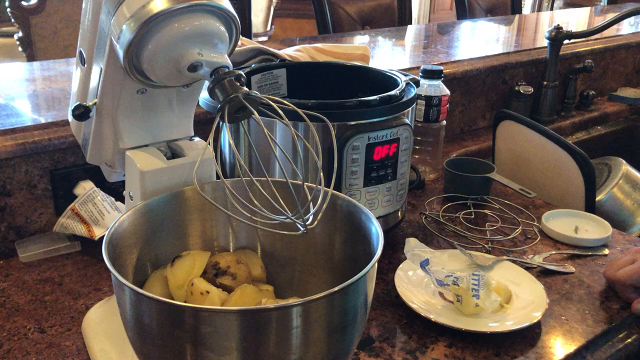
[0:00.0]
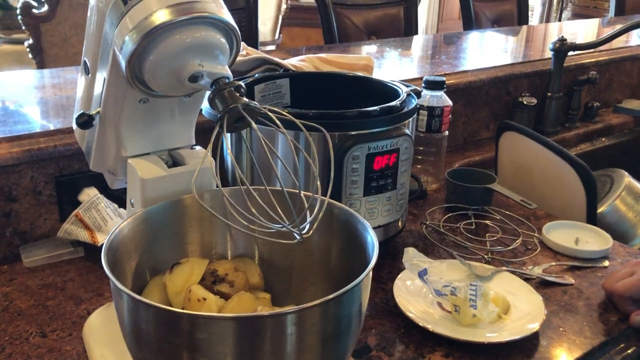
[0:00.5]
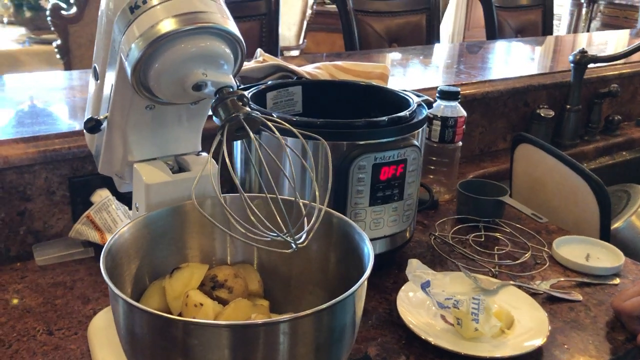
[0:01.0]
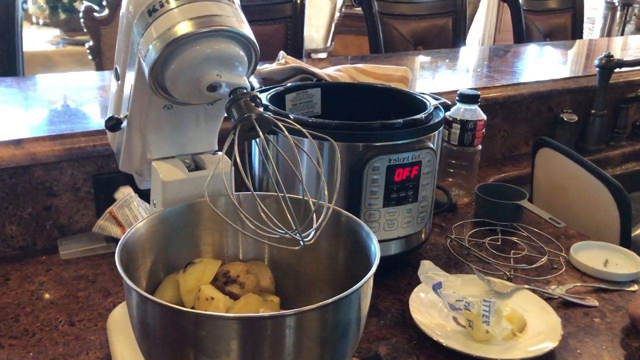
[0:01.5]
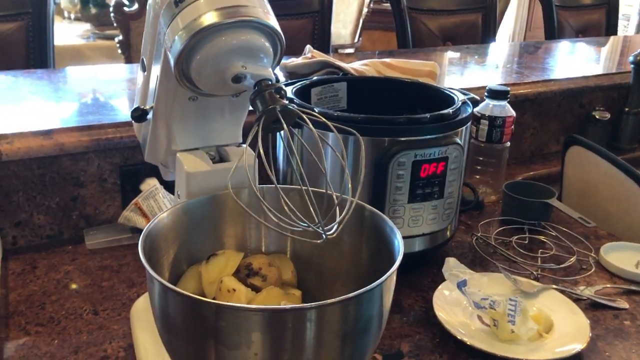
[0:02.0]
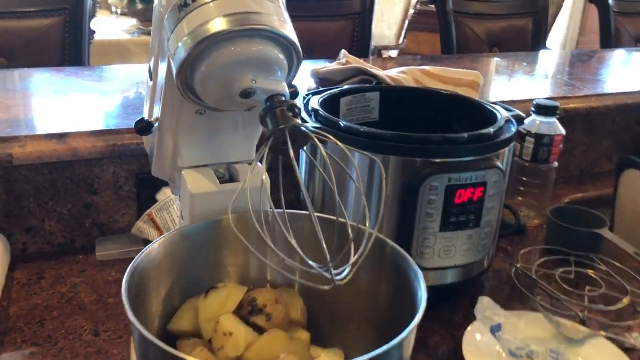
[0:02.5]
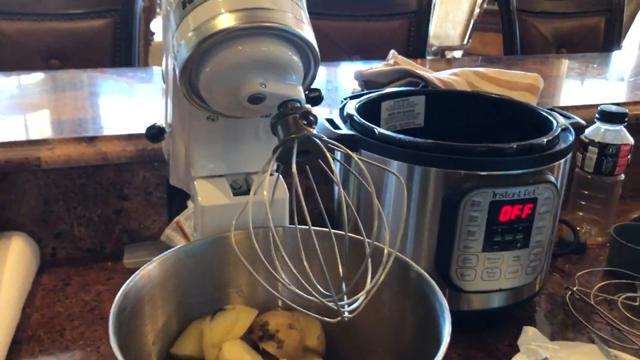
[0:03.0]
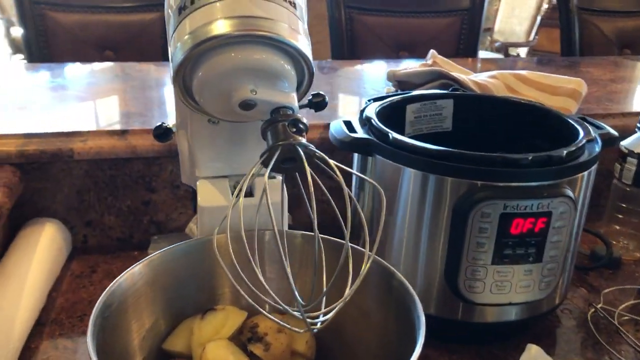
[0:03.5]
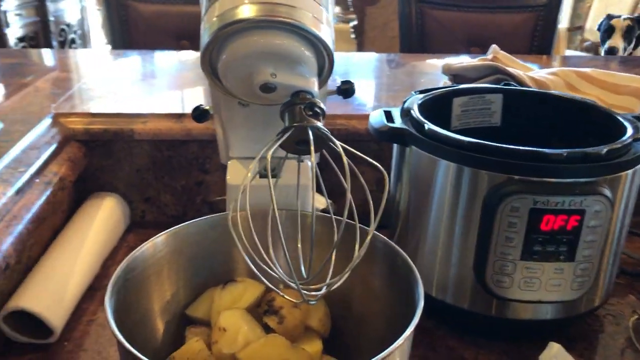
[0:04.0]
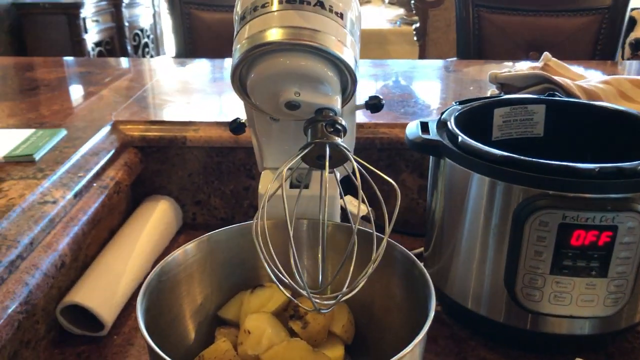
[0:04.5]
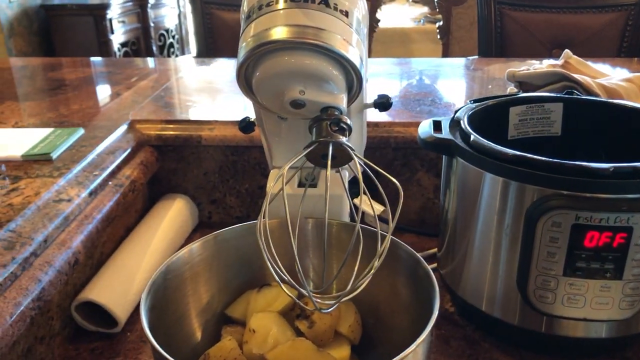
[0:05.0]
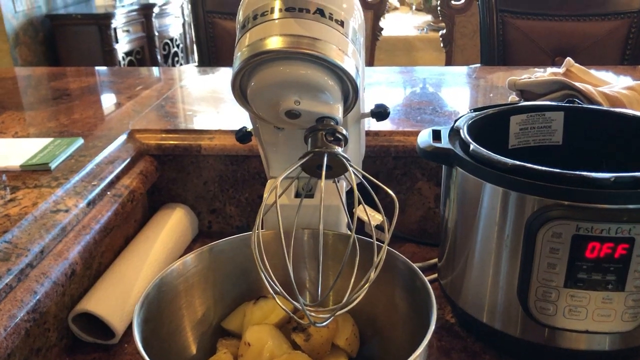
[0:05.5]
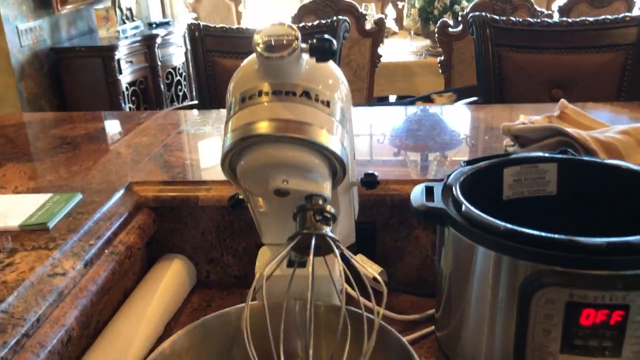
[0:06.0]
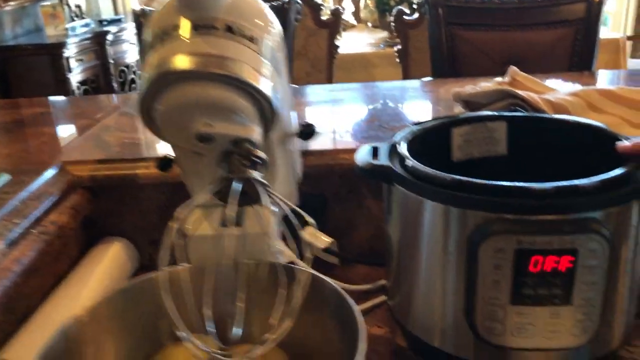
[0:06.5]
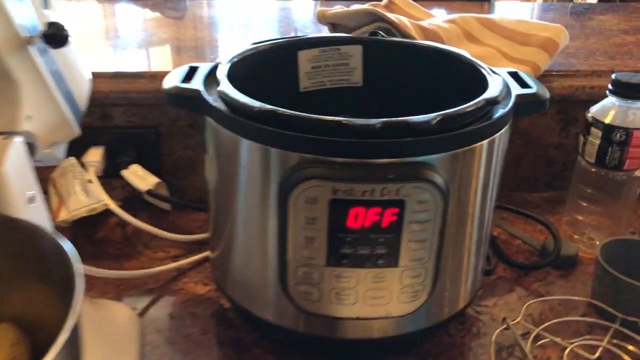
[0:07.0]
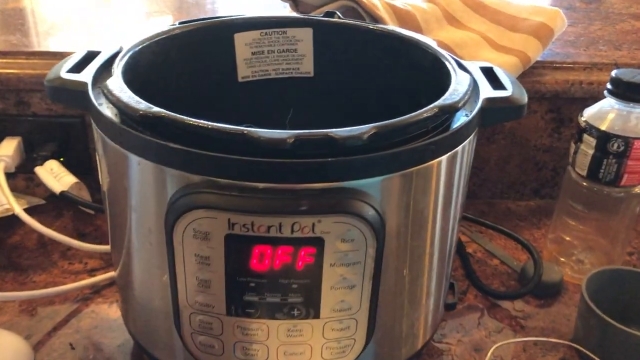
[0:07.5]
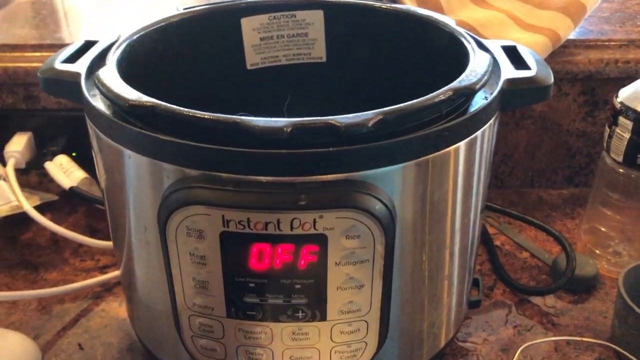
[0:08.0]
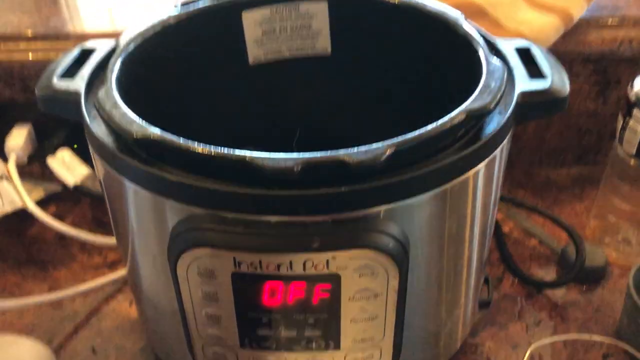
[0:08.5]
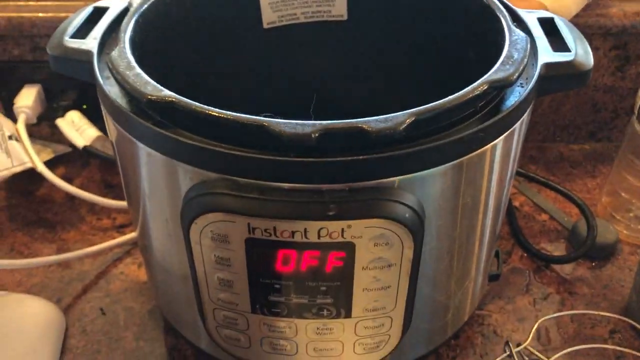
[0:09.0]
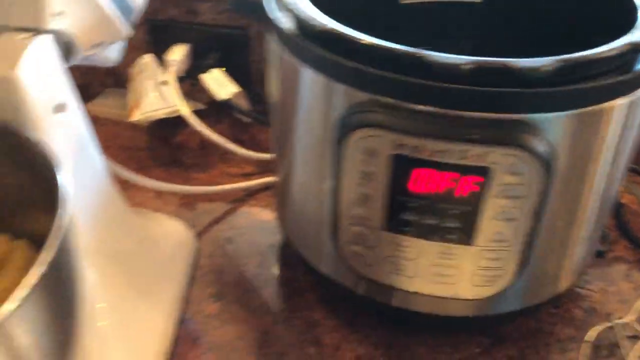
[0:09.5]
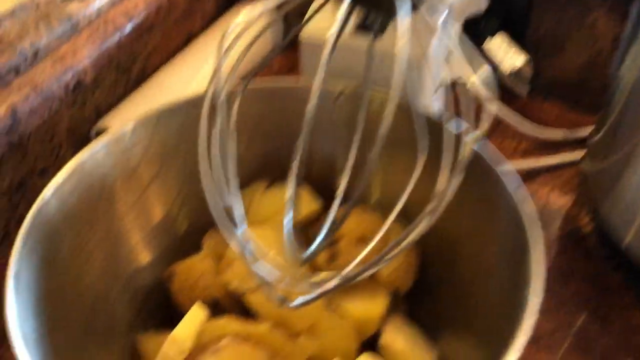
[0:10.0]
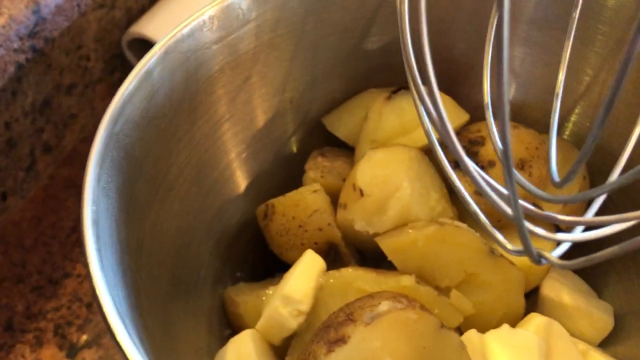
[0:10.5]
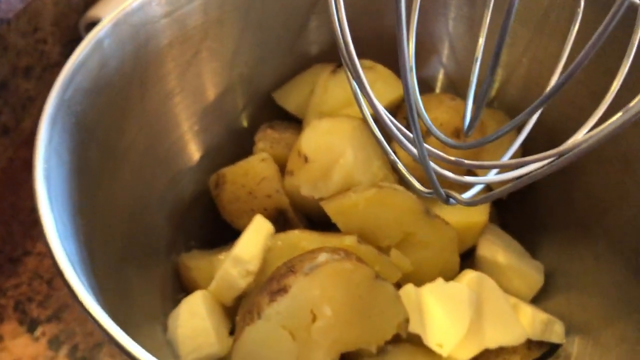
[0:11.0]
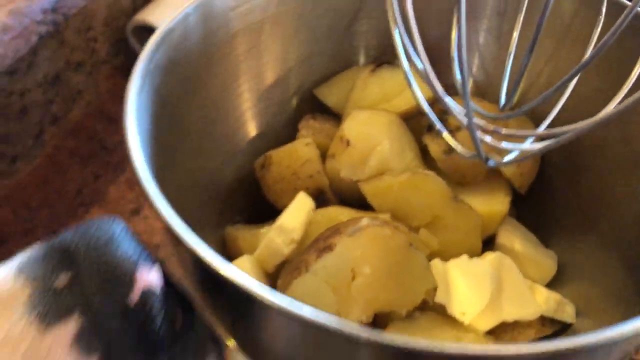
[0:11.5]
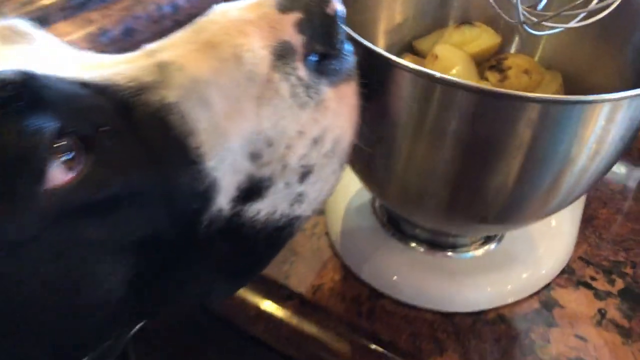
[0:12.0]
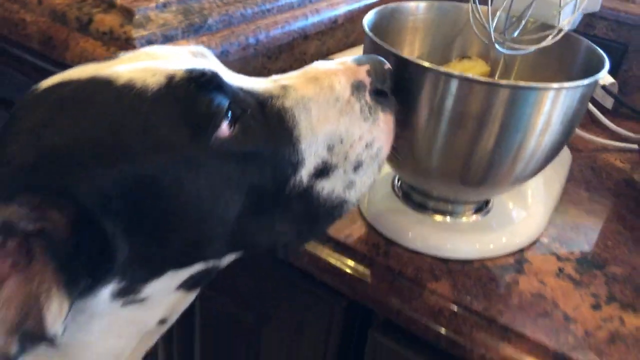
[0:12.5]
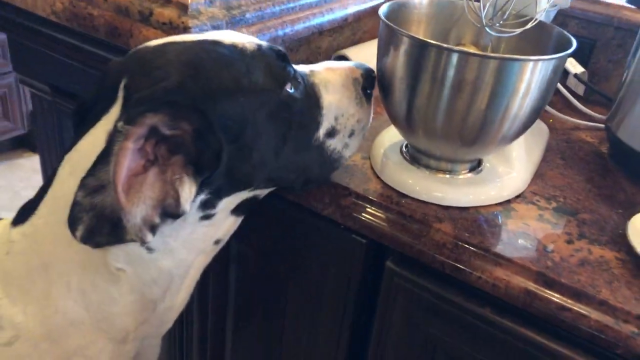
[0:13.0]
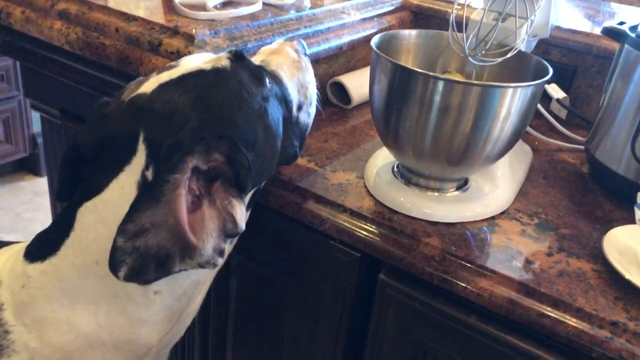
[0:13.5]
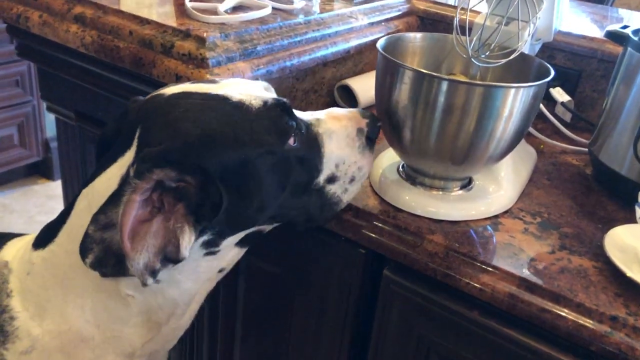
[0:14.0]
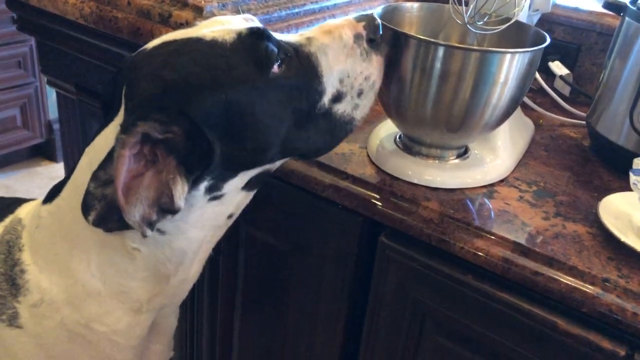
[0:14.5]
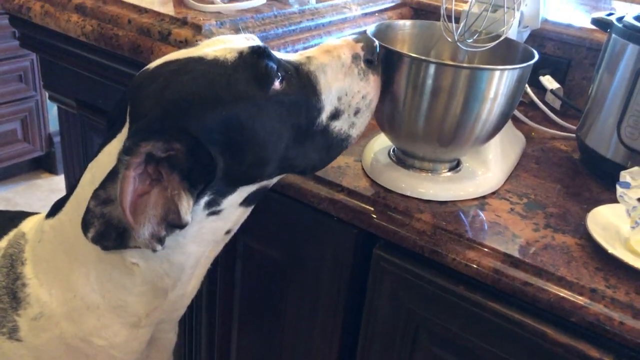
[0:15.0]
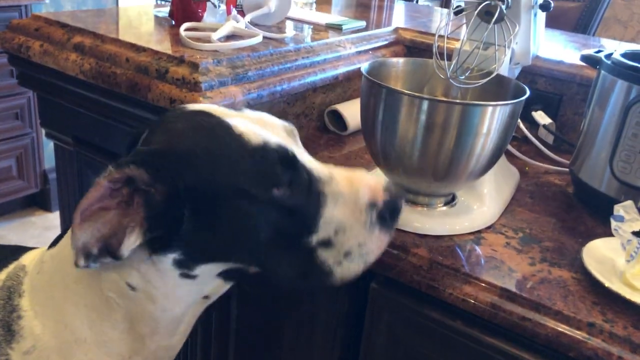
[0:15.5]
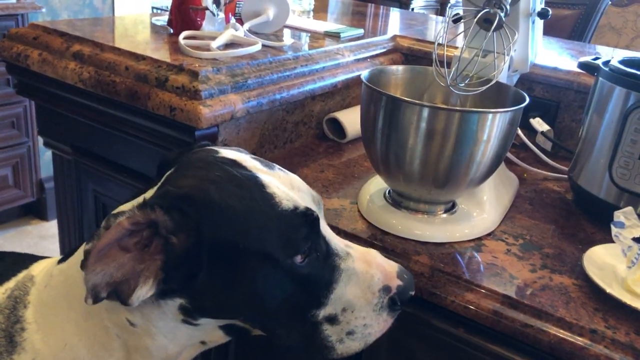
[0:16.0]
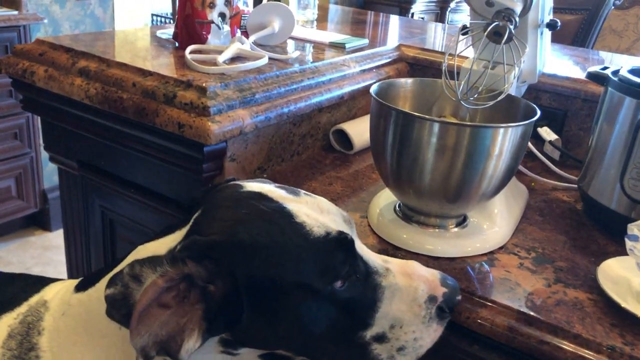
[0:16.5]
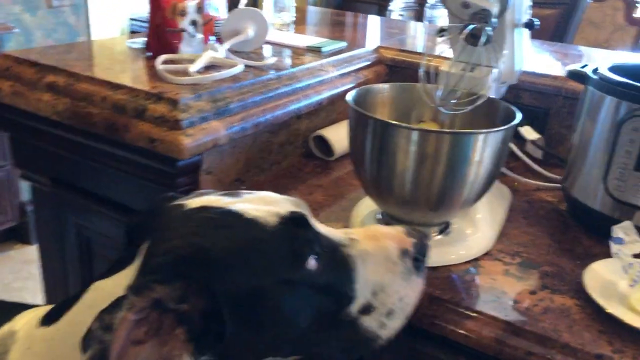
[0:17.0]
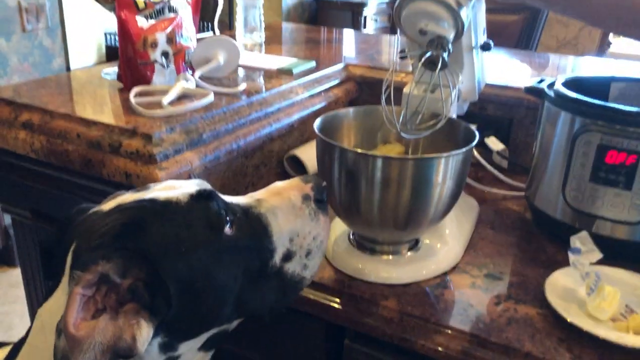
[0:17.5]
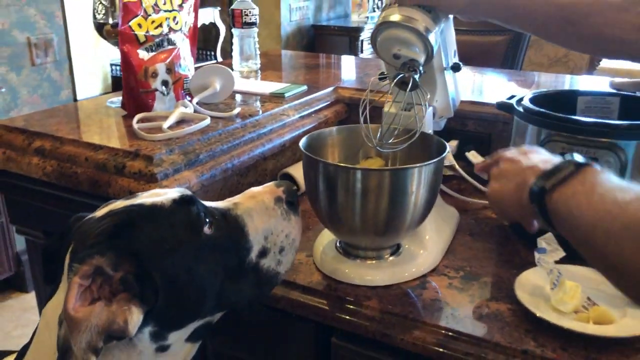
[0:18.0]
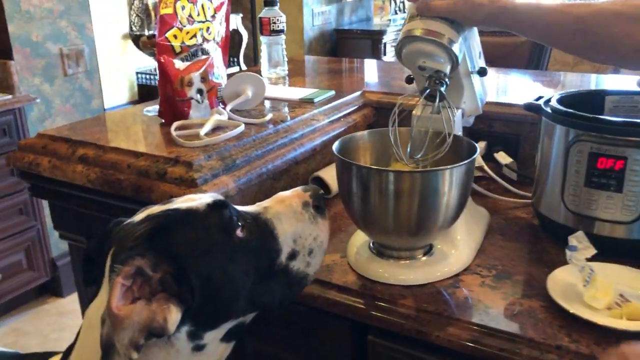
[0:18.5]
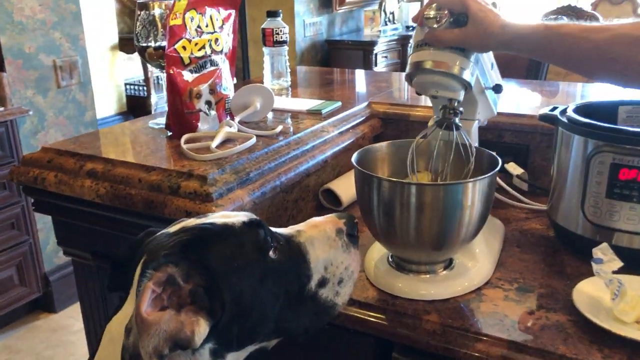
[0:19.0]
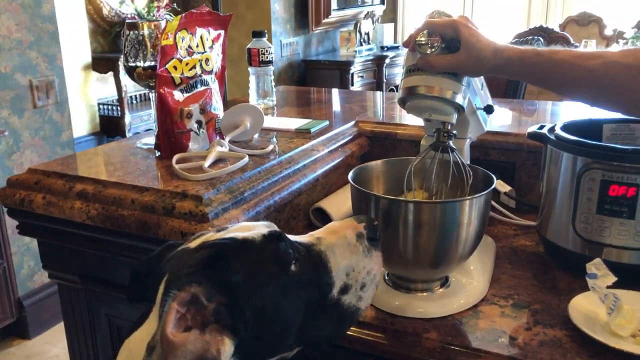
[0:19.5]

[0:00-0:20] A kitchen is actively being used for cooking, and the meal being made looks like mashed potatoes. A pressure cooker and an electrical whisk are on the counter alongside dishes that look dirty. The kitchen has a very brown theme, and there appears to be some dog food on the counter. There are dirty dishes in the sink and a black tap. Behind the counter there appear to be brown chairs, giving the space a combined kitchen and dining area style. A dog comes from behind the counter to the electrical whisk to sniff what is inside, possibly smelling the potatoes. A Caucasian hand reaches to the electrical whisk and pushes it down to whisk the unpeeled potatoes. A bottle, a measuring cup, a spoon and what looks like butter are also on the counter.